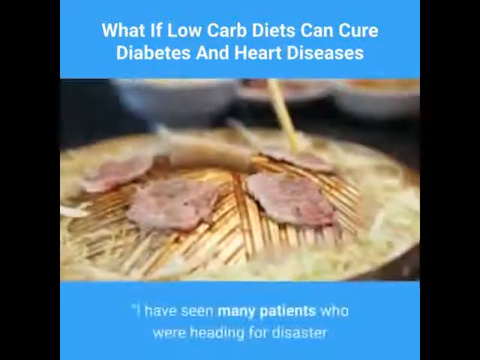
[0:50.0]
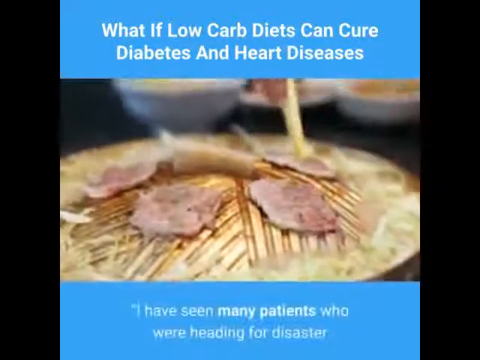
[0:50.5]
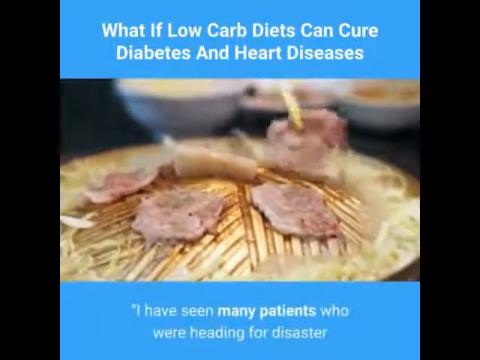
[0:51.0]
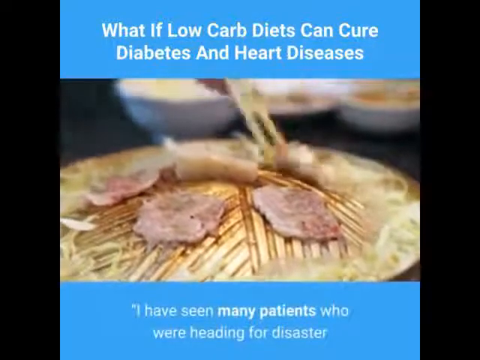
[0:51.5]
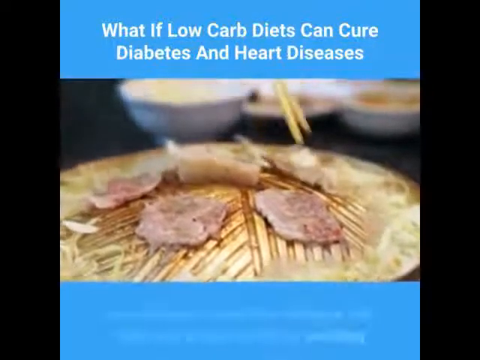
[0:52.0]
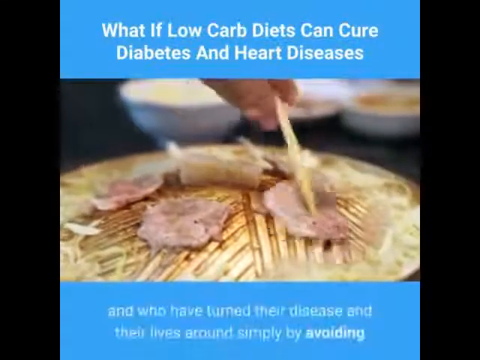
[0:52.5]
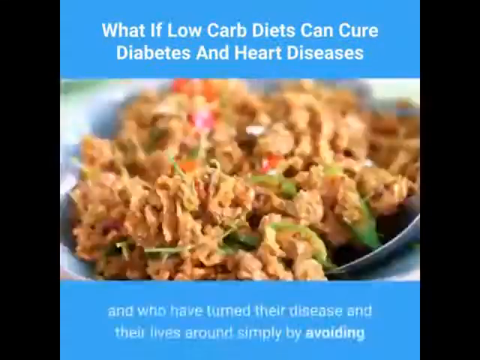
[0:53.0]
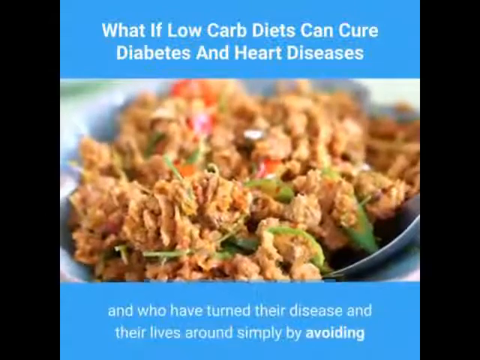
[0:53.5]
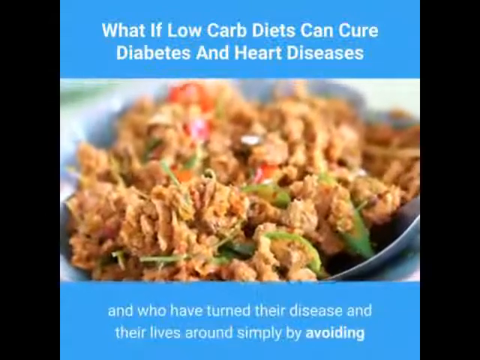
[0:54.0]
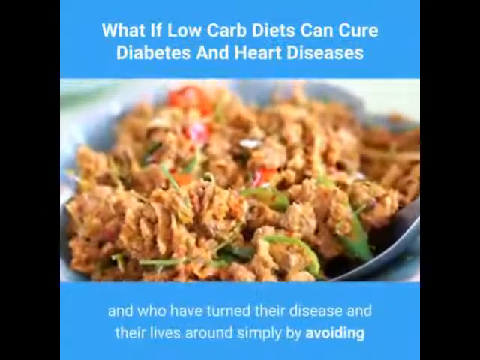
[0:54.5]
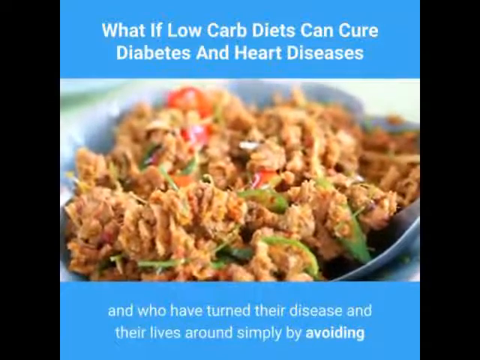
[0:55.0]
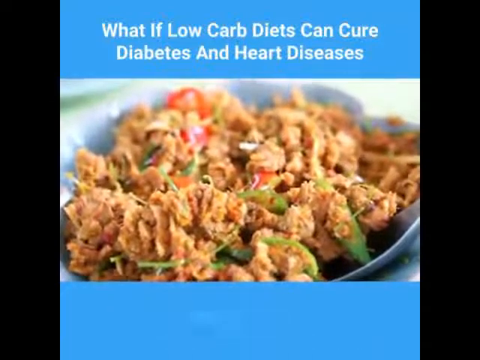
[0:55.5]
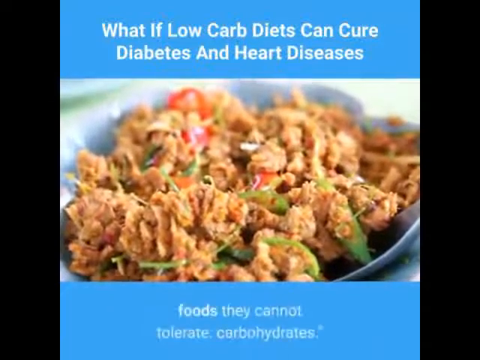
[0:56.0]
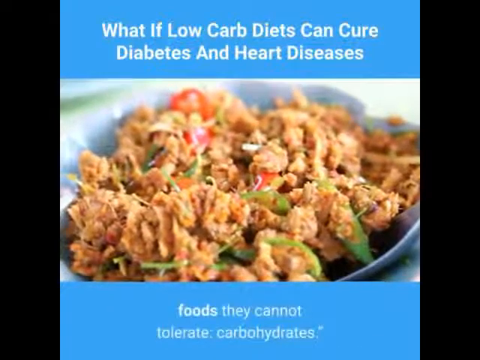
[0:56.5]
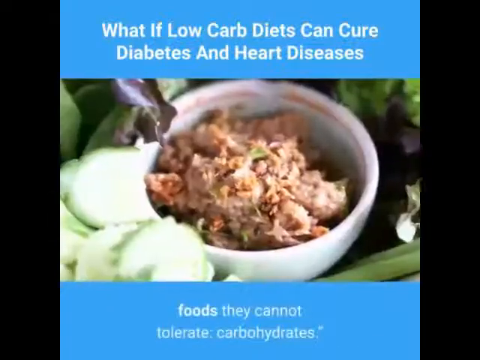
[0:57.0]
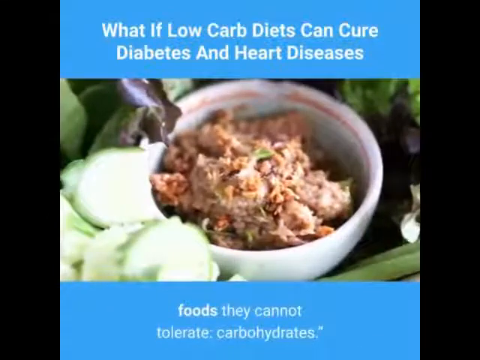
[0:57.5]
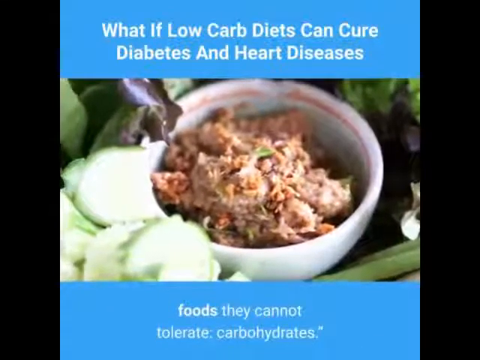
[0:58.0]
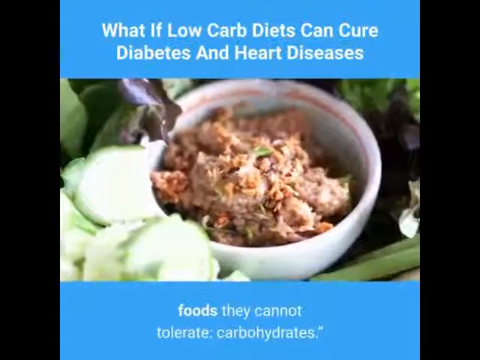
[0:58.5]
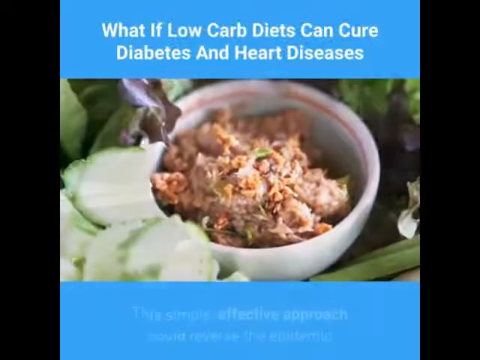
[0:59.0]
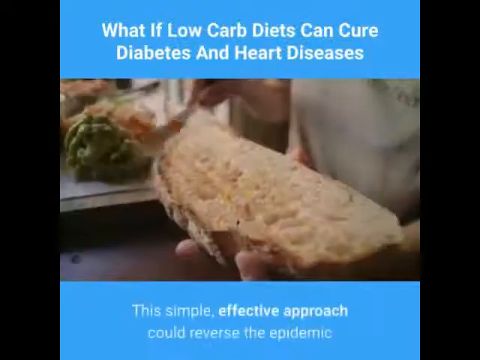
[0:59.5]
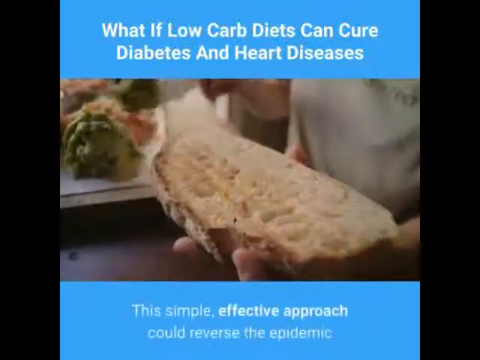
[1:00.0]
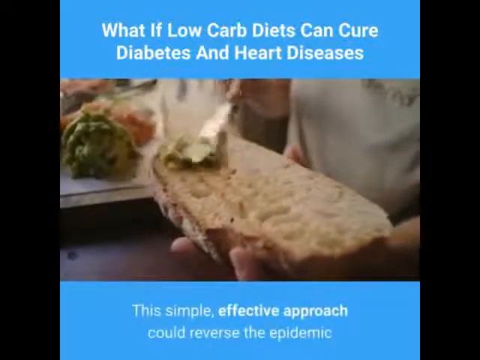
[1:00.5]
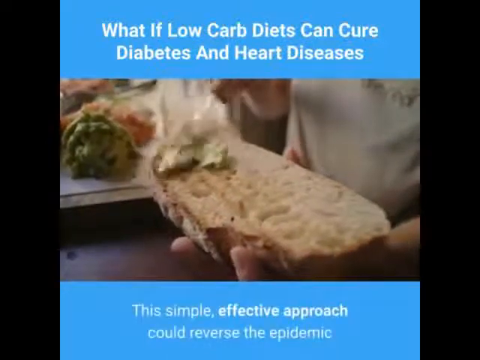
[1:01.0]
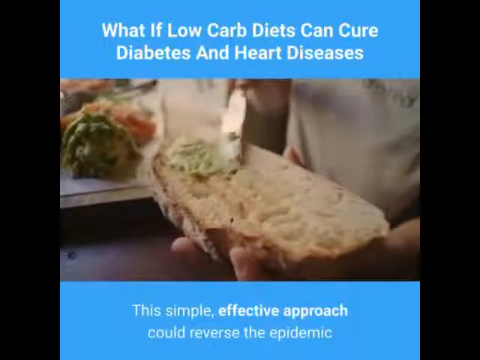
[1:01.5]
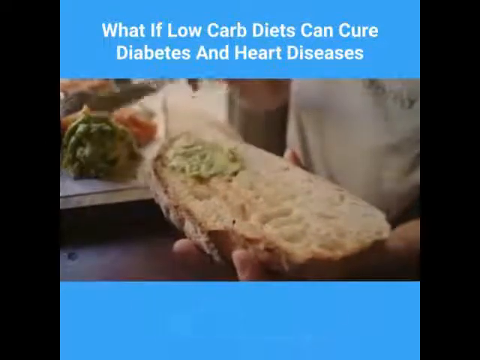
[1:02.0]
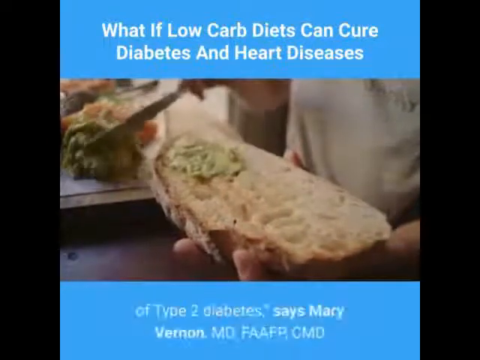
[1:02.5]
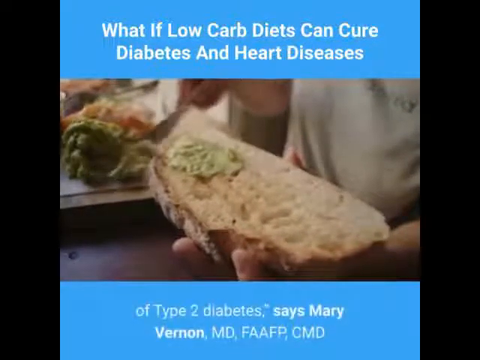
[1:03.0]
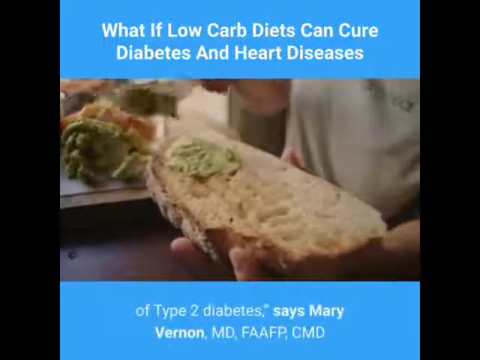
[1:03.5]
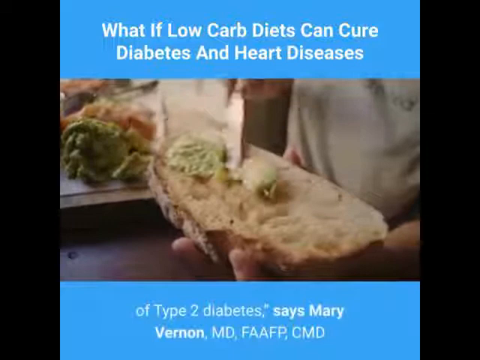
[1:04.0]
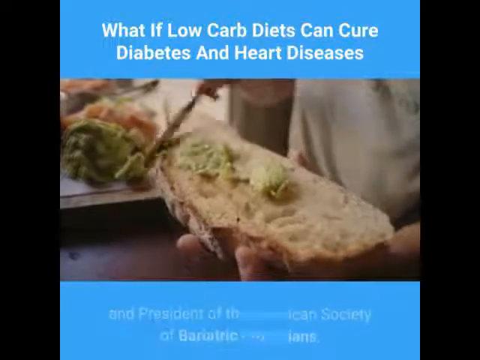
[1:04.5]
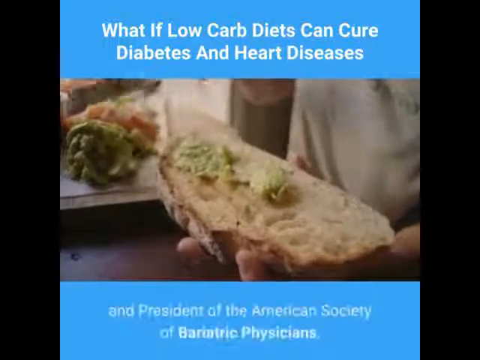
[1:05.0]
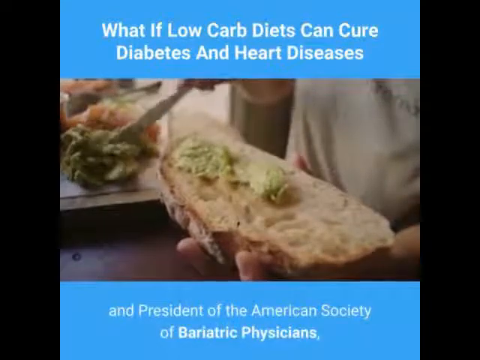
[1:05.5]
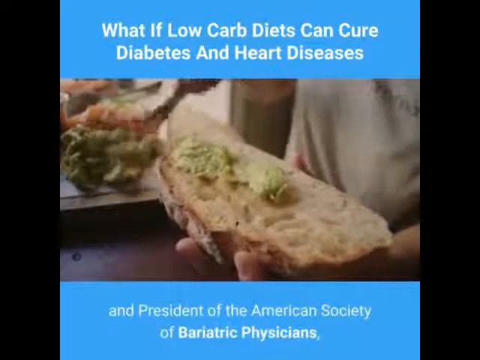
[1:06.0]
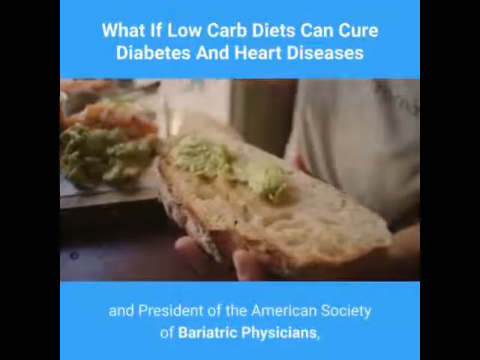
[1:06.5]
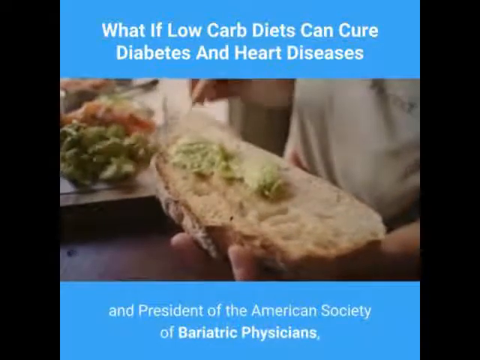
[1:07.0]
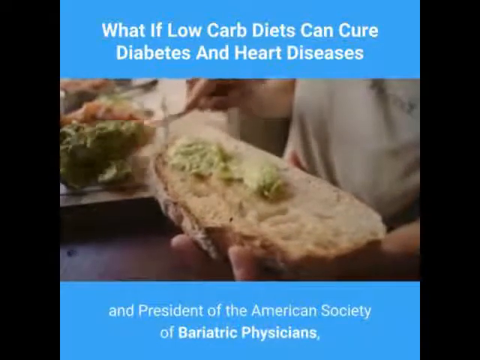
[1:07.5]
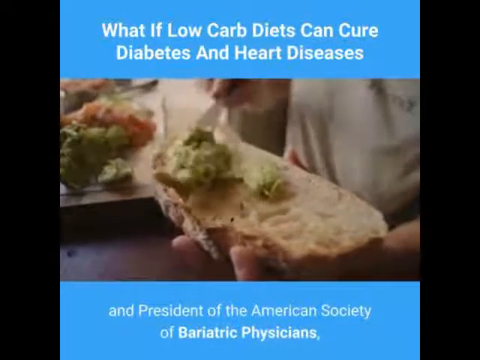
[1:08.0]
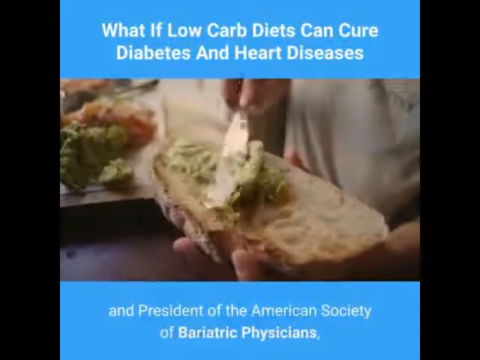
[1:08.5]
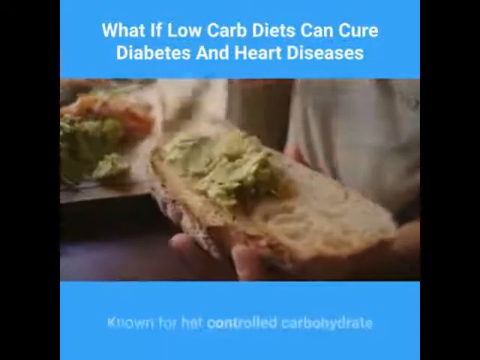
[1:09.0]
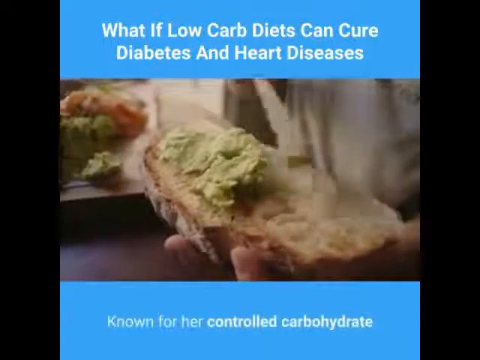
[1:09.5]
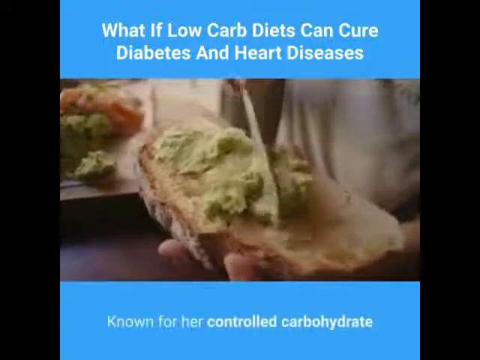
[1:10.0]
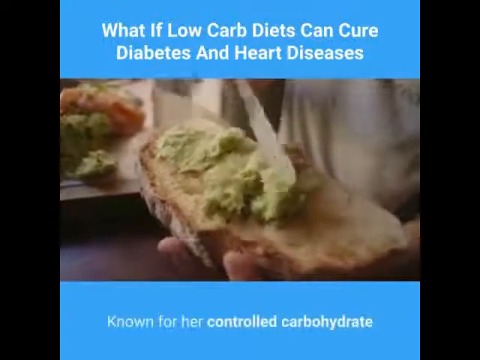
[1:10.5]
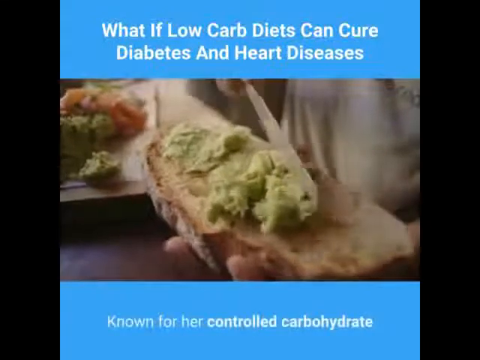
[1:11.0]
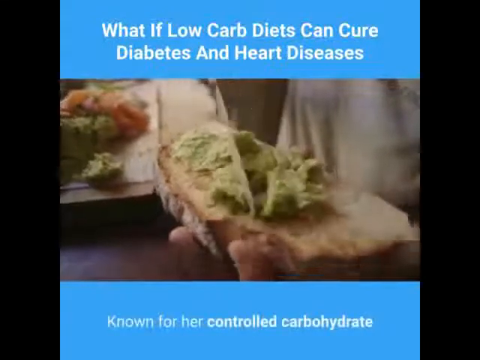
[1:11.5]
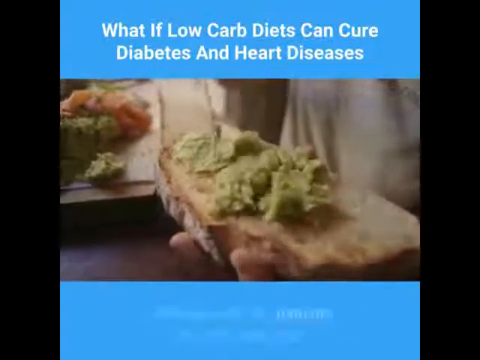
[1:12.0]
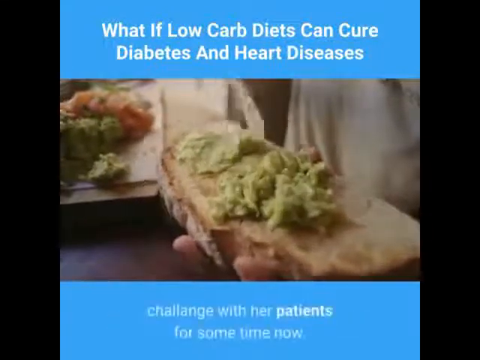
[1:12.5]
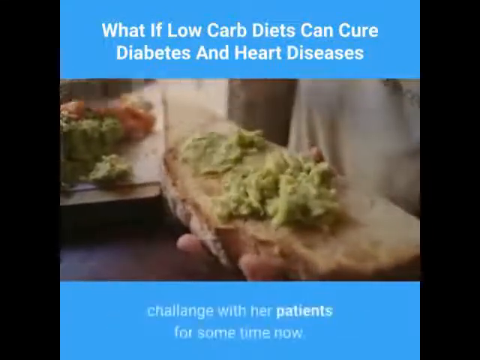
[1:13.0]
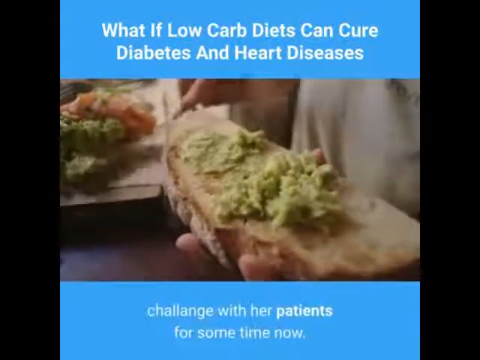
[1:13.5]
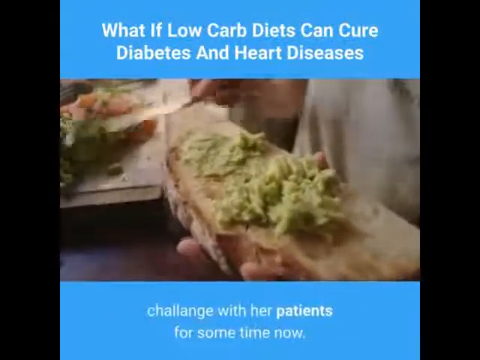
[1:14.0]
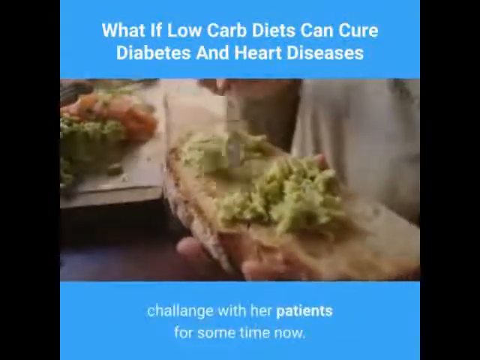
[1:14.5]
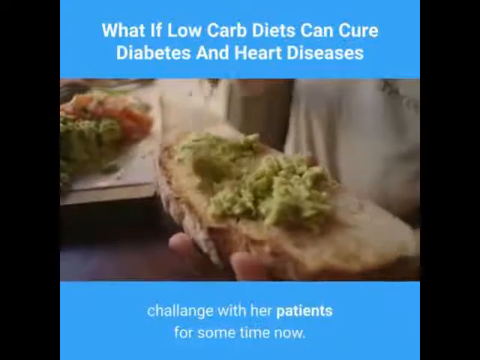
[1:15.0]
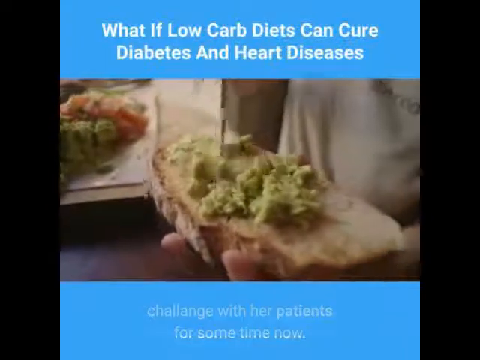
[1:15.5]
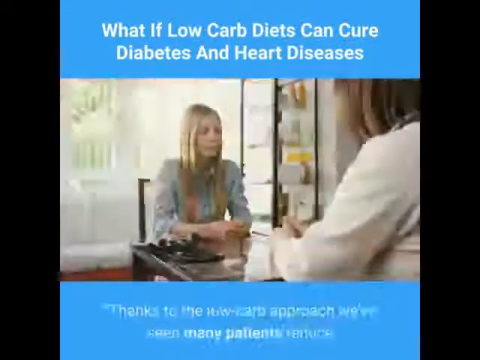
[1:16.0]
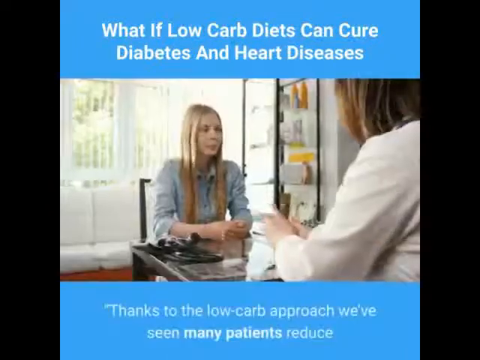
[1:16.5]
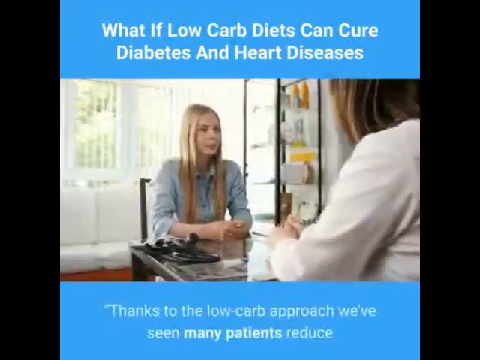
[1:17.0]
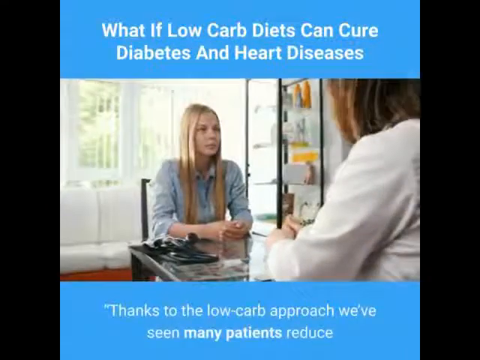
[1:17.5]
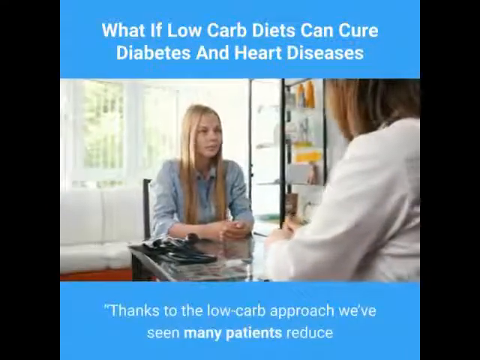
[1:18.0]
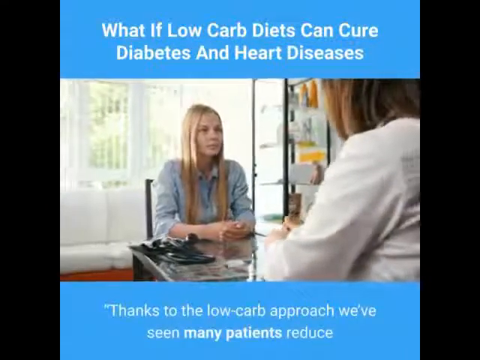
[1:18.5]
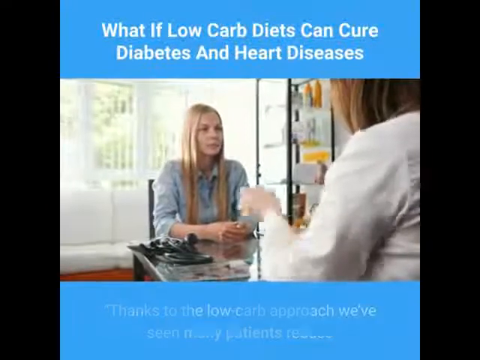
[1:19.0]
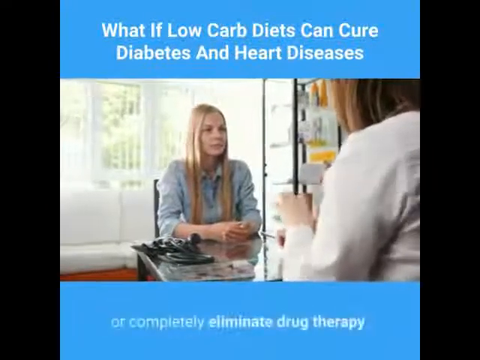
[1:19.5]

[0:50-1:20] Meat is cooking. On-screen text includes the phrases "foods that cannot tolerate carbohydrates", "the simple effective approach", "the epidemic of type two diabetes" and "the president of American Society of Bariatric Physicians". People prepare foods. A woman with long hair sits at a table, talking with someone who could be a doctor and who apparently wears a white coat. They are in an office, with a window behind the younger woman, who may herself be the doctor. Someone spreads avocado on a piece of bread.